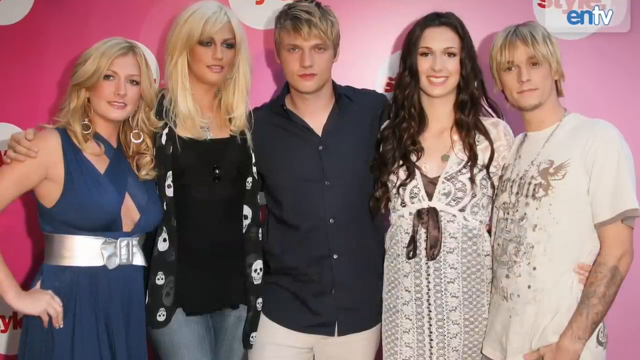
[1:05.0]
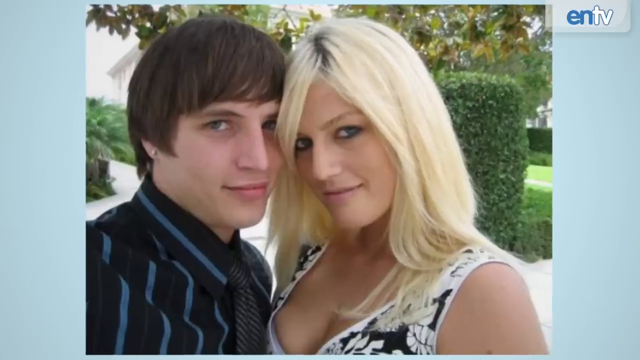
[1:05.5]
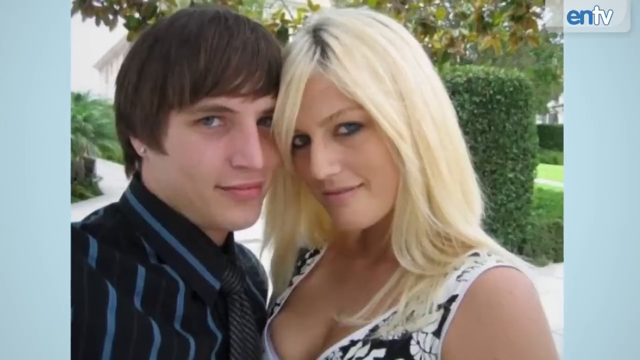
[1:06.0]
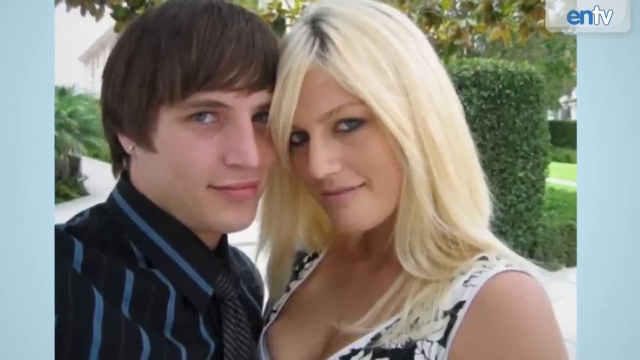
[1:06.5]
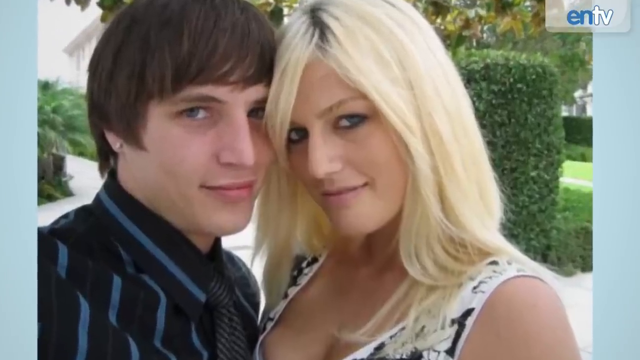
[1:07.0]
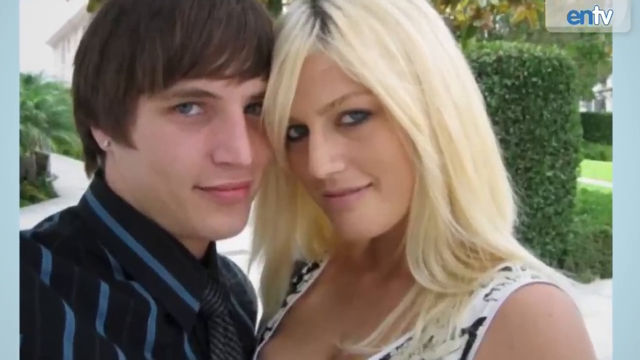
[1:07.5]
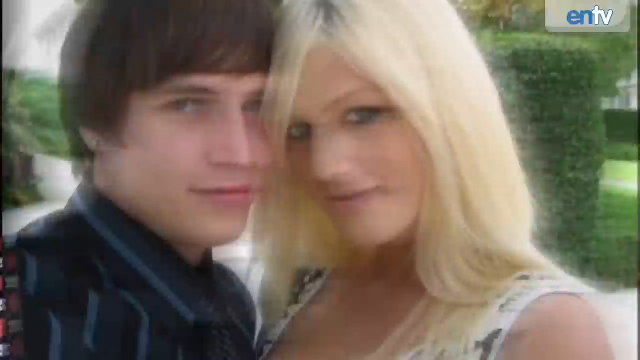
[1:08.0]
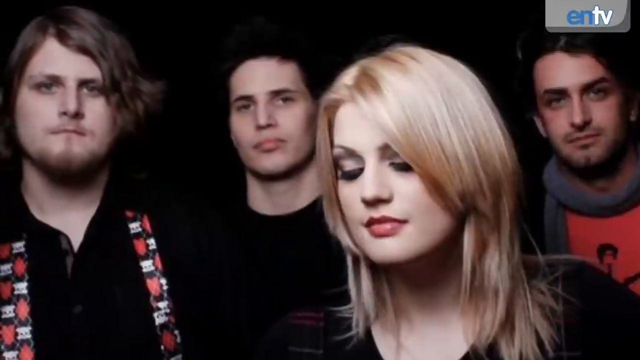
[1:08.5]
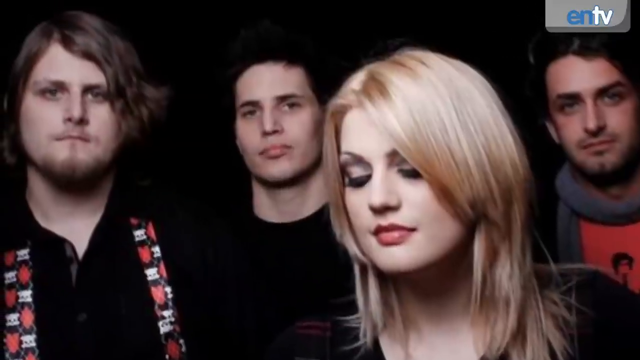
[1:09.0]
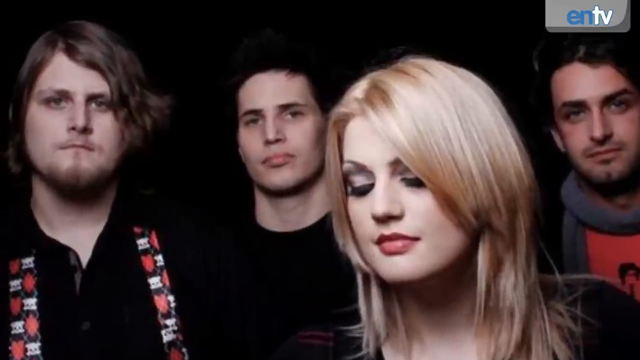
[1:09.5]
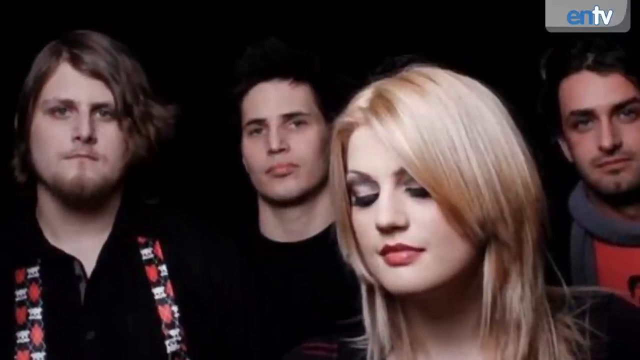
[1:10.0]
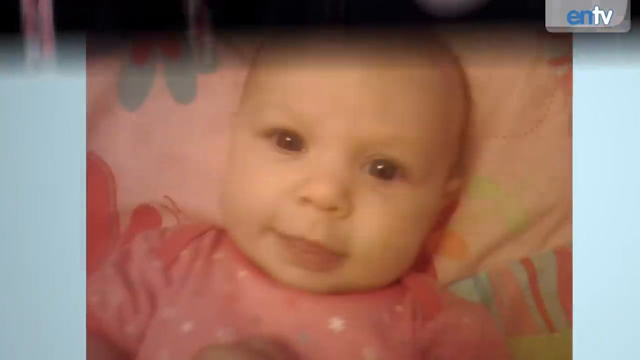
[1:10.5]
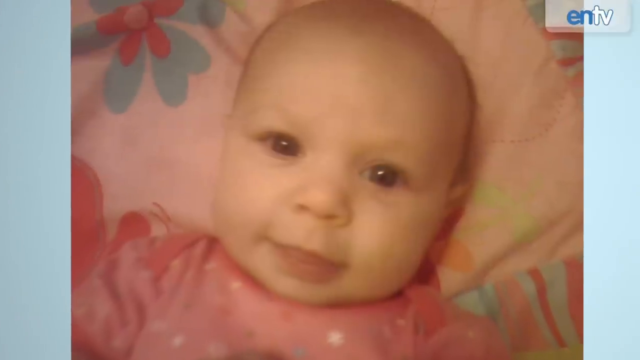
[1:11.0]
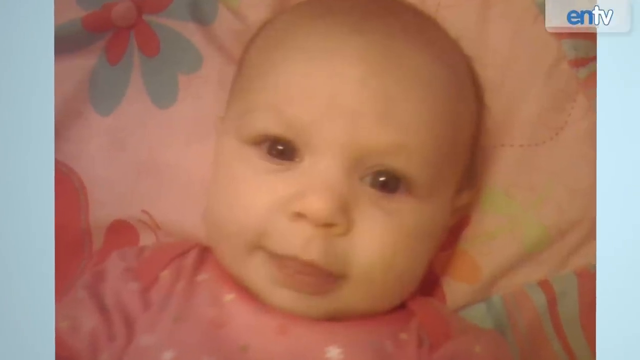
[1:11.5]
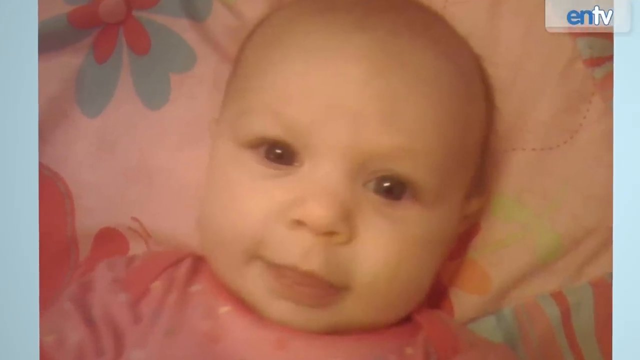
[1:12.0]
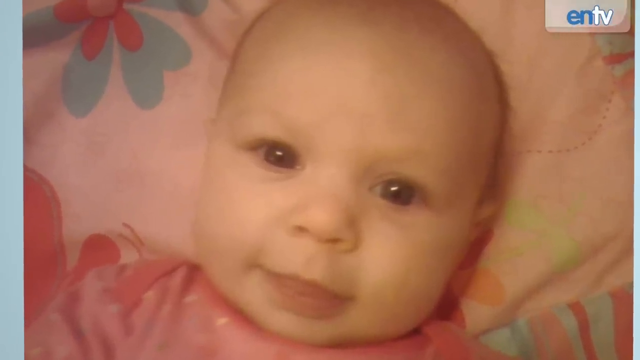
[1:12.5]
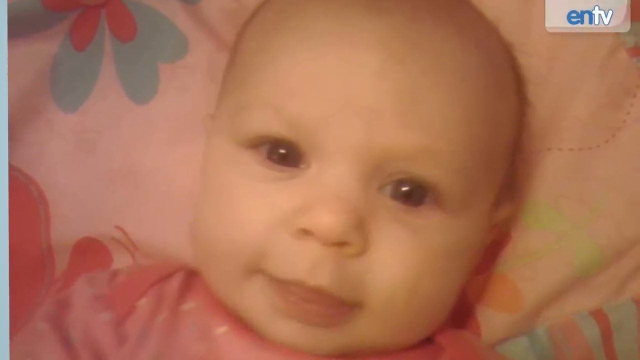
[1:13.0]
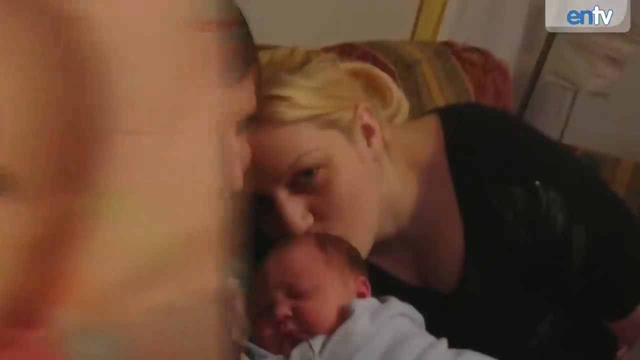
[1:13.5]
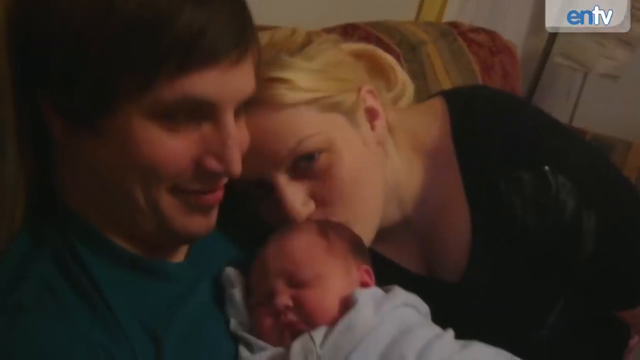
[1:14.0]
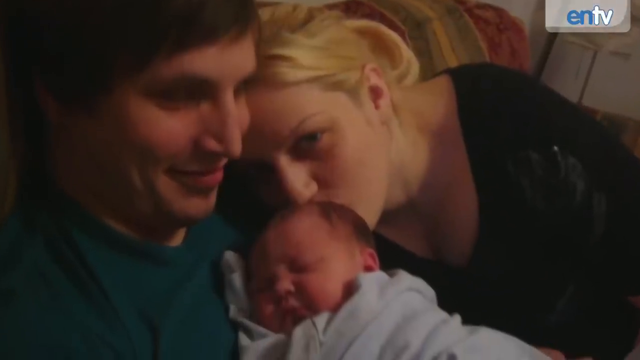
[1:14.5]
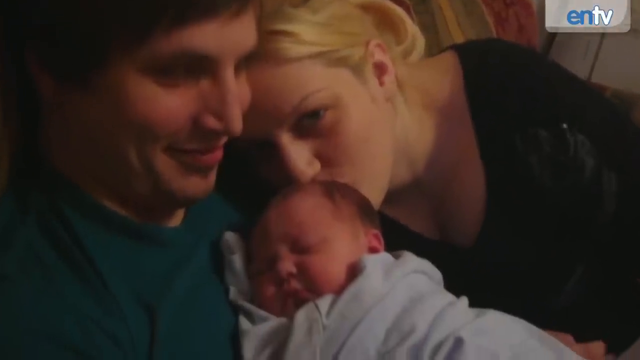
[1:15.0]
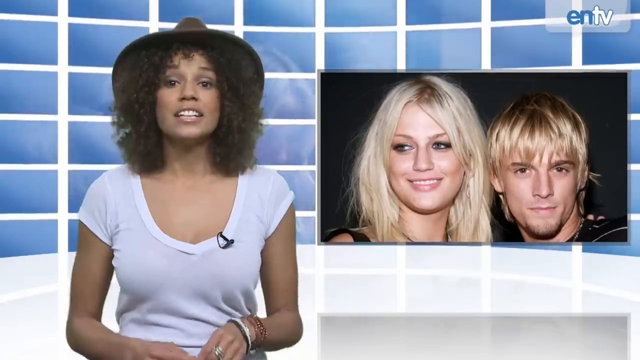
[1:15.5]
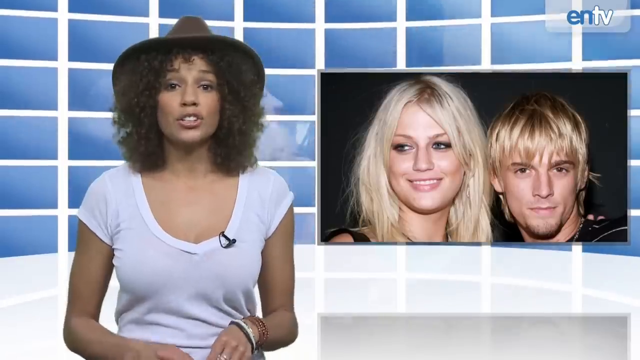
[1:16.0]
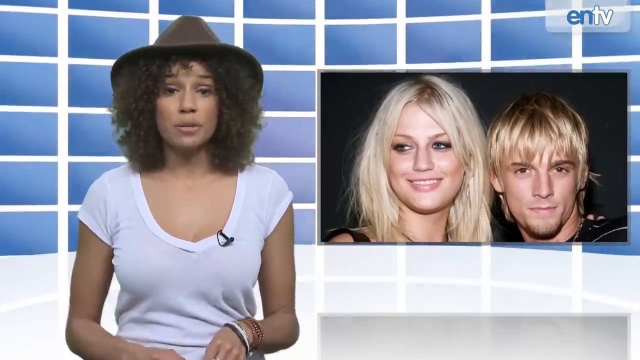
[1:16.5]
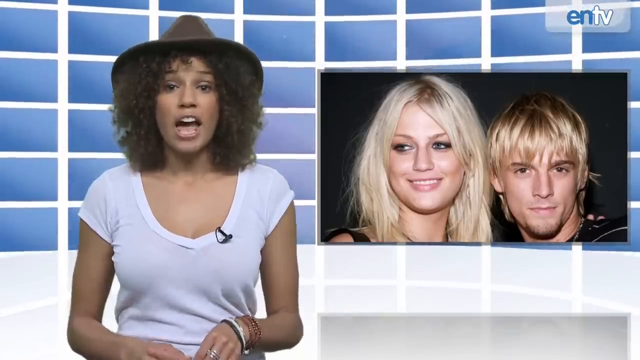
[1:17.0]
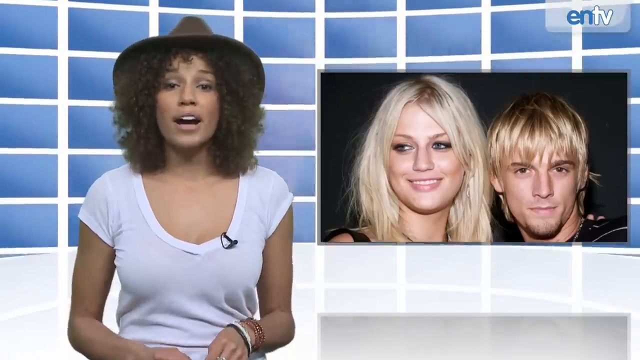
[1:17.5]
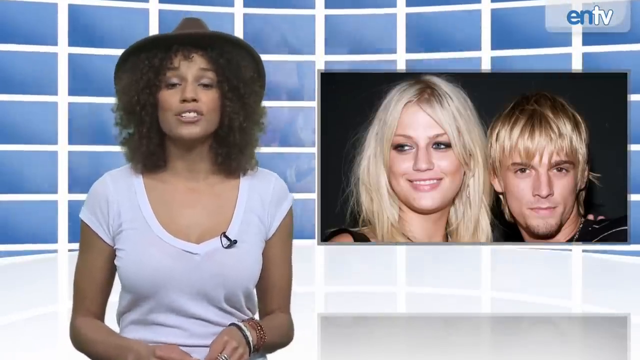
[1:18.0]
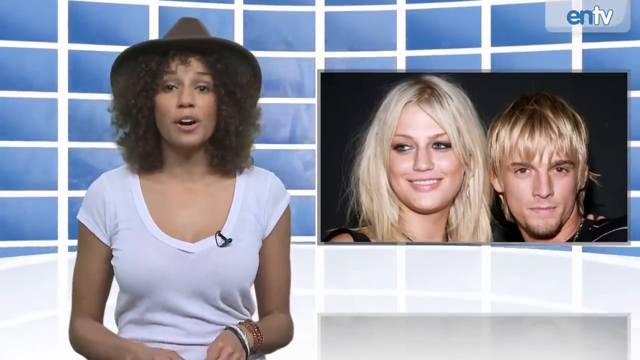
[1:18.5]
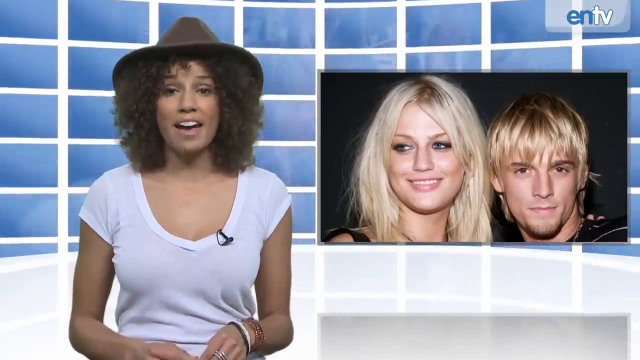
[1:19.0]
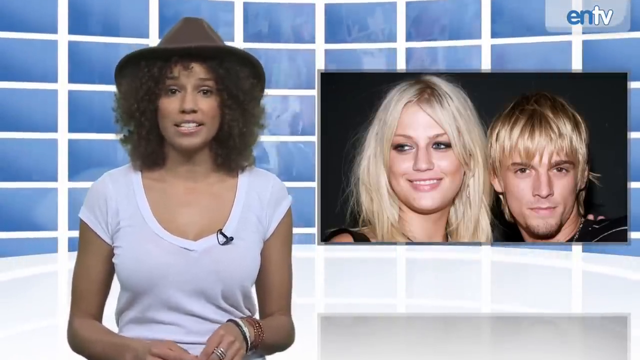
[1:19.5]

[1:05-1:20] A photo shows the blonde woman, Leslie Carter, leaning her head against the head of a white man with brown hair. Another photo shows four people in what looks like a band photo: three men with brown hair and a woman with blonde hair in the front. A baby photo shows a baby looking at the camera while lying on flower-patterned bedsheets. Another photo shows two people, presumably parents and presumably the brown-haired man and blonde-haired woman from before, holding a newborn baby while the woman kisses the baby's head. The video cuts back to the newscaster speaking.